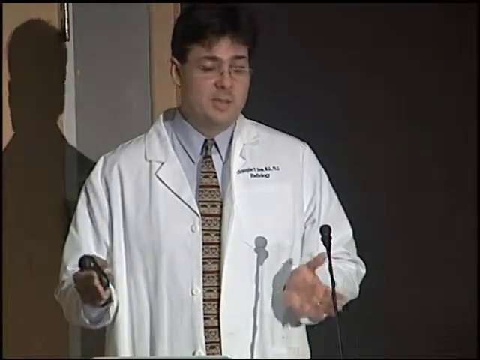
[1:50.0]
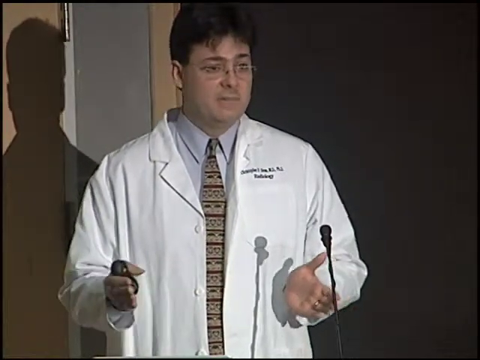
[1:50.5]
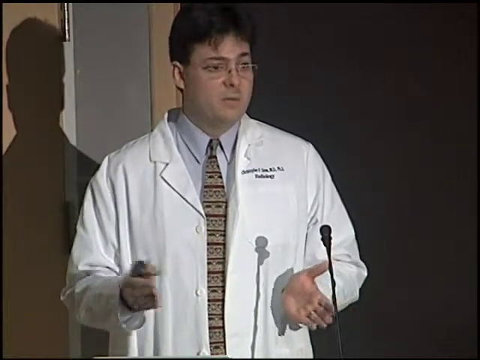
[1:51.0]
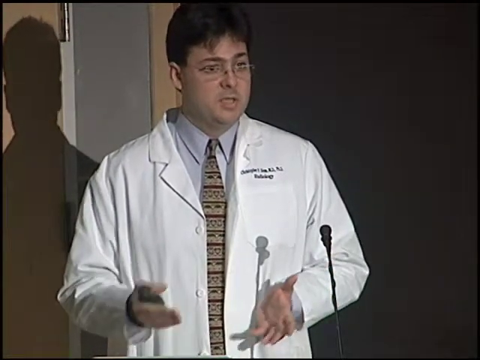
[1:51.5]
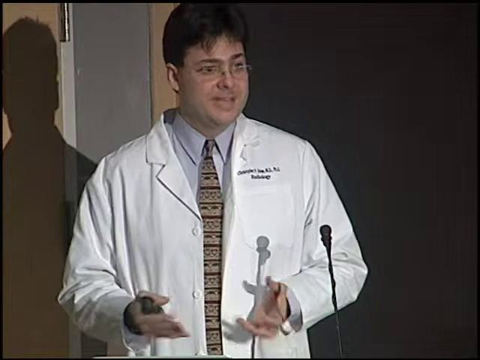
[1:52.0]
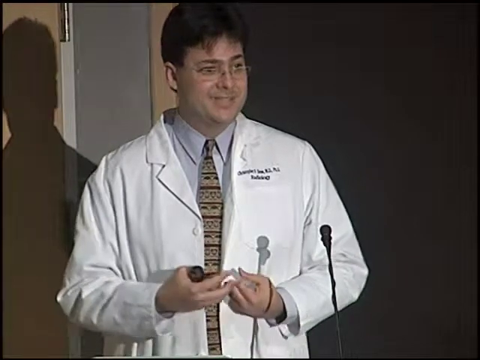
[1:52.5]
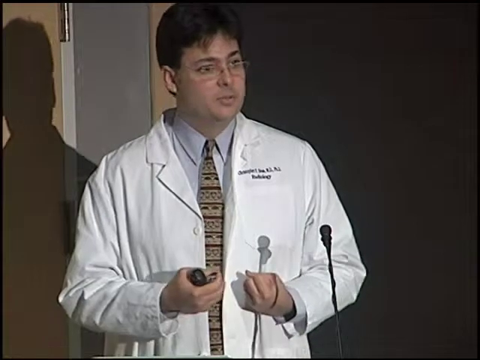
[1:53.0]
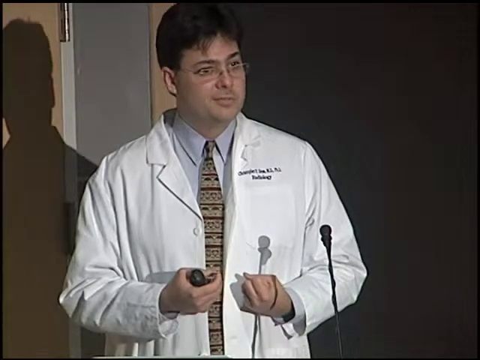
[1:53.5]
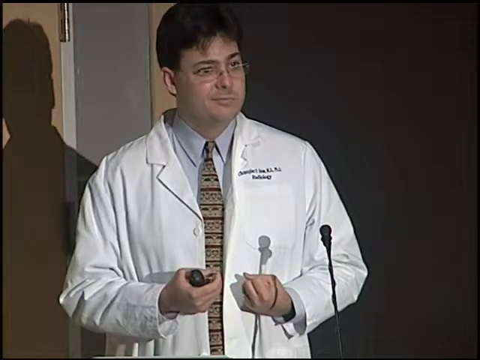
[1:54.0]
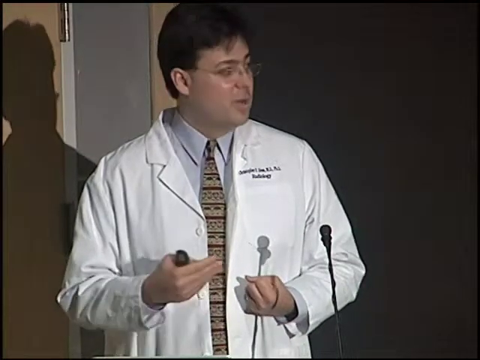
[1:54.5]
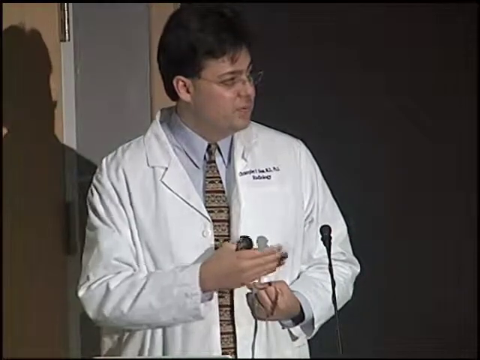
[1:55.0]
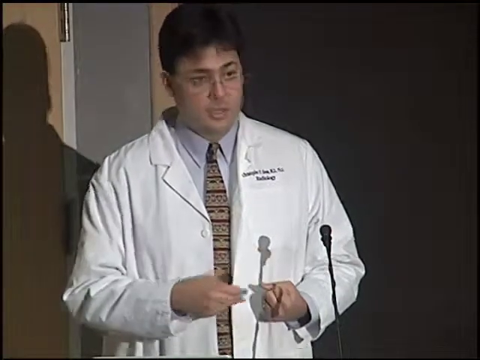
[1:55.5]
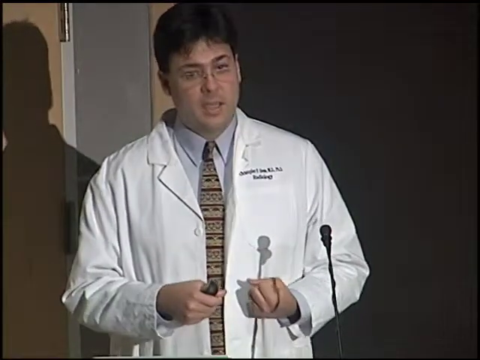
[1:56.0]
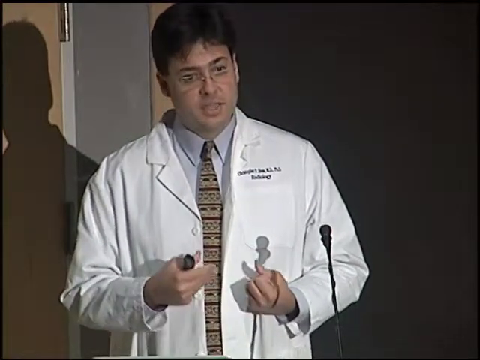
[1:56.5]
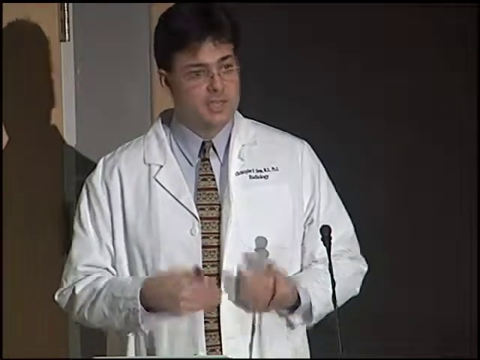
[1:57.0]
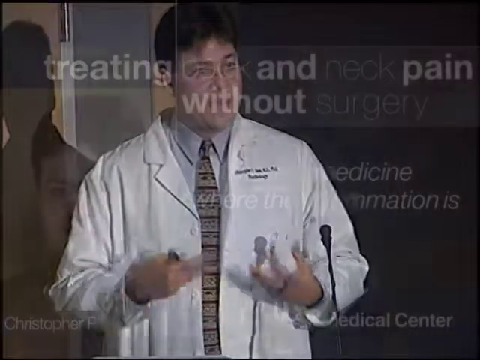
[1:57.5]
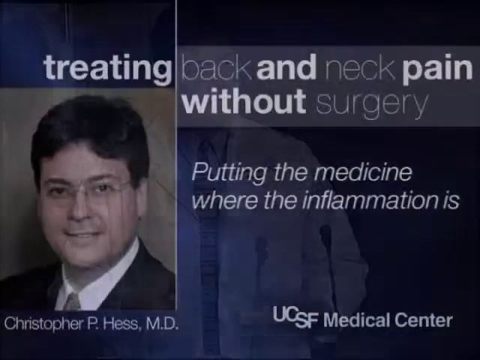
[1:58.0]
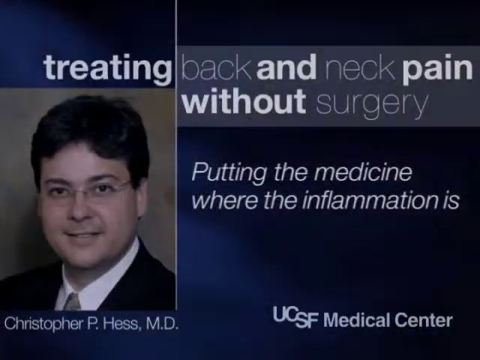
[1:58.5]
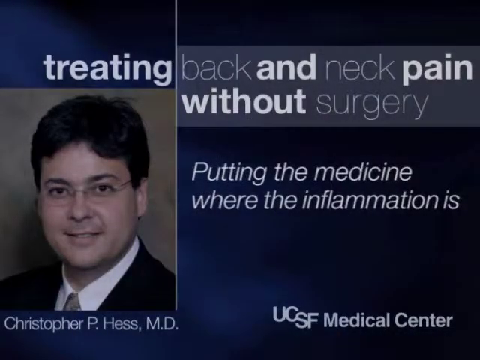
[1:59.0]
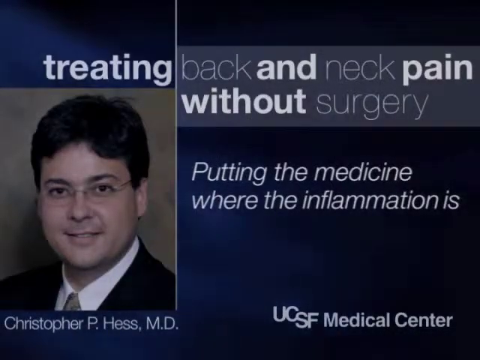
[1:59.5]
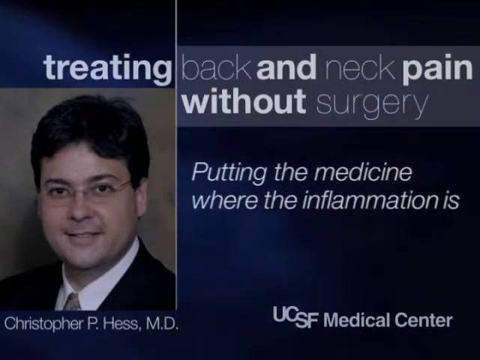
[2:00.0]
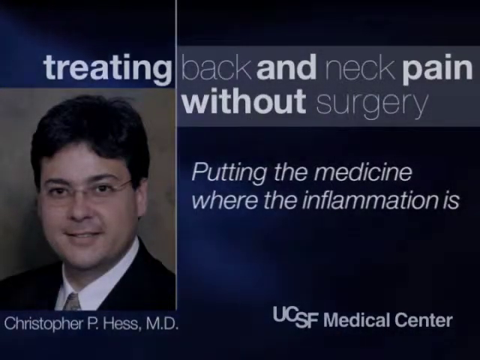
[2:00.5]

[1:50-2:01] The doctor is still presenting on stage, on the left side of what appears to be a small auditorium. He wears a medical jacket with black words on it, which appear on the right side of the screen but are on the left side of his jacket, probably his name and department. He talks, moves his hands and makes a fist. The remote is in his right hand, even though it looks like his left because he is facing the camera. At the end, the slides, which were black with an orange title and bullet points as red circles next to white text, are no longer shown. Instead the first slide appears: a bluish background with different shades of blue, and at the top in white the title "treating back and neck pain without surgery," with every other word in bold. Below it, in regular type, it reads "putting the medicine where the inflammation is." At the bottom right-hand corner is "UCSF Medical Center," along with an image of the doctor who was presenting.